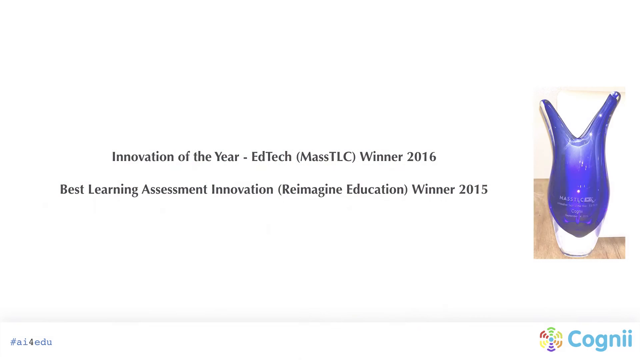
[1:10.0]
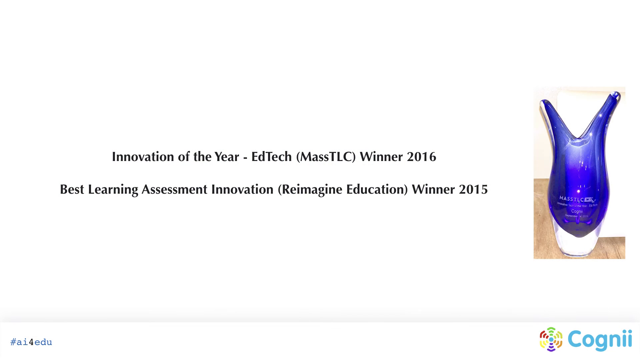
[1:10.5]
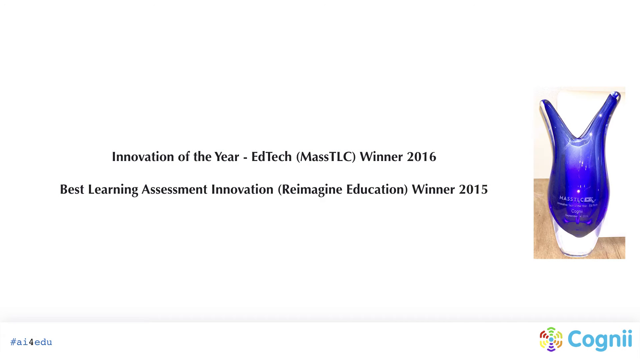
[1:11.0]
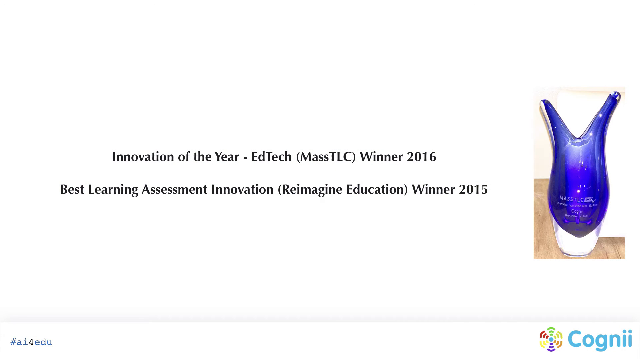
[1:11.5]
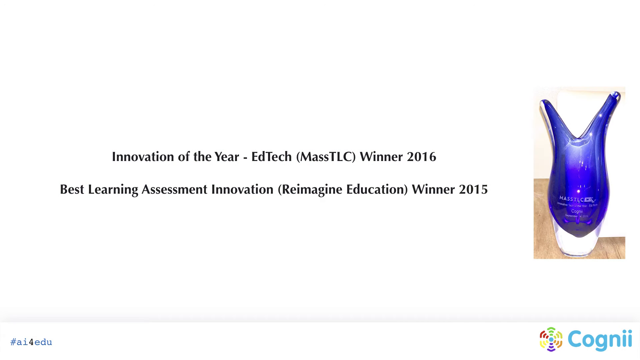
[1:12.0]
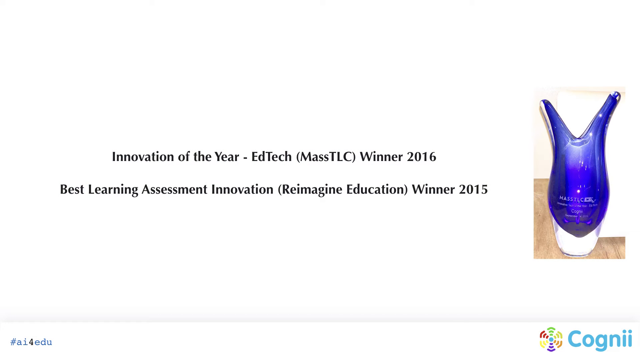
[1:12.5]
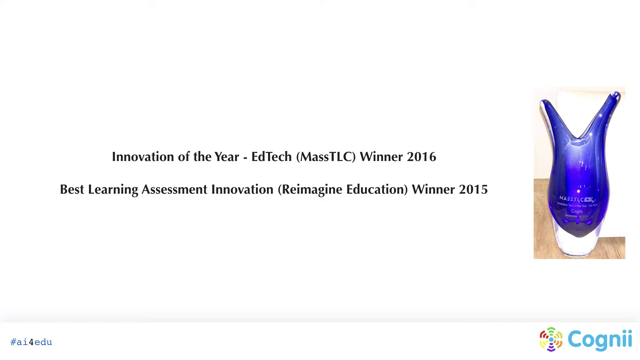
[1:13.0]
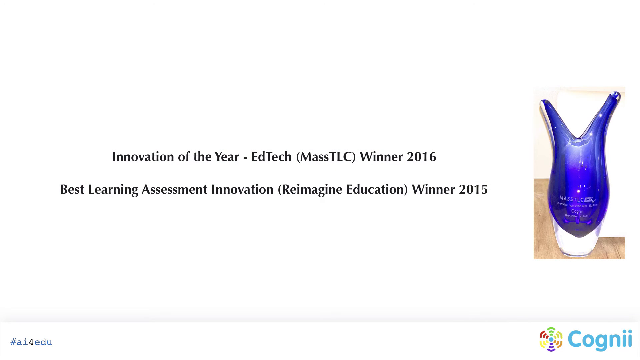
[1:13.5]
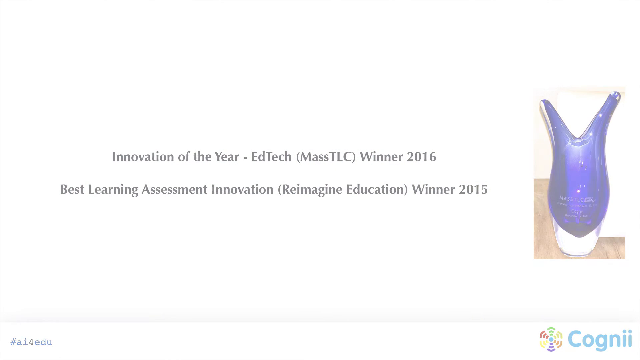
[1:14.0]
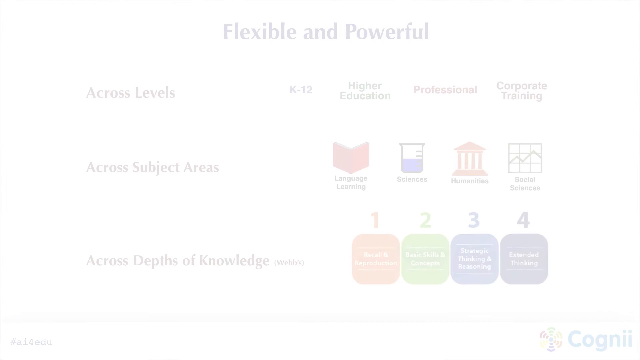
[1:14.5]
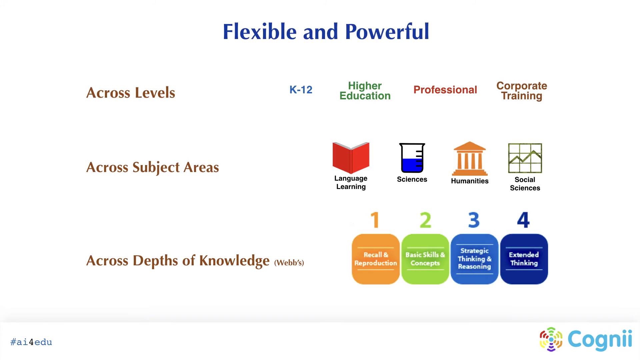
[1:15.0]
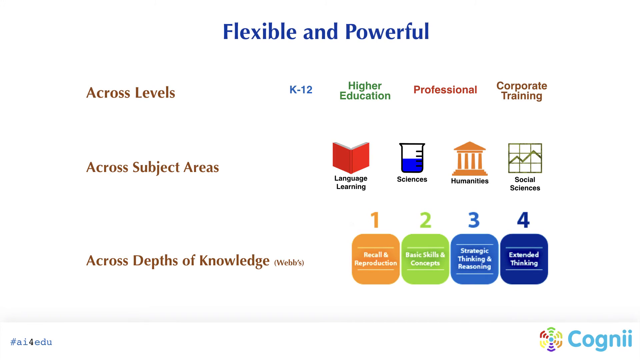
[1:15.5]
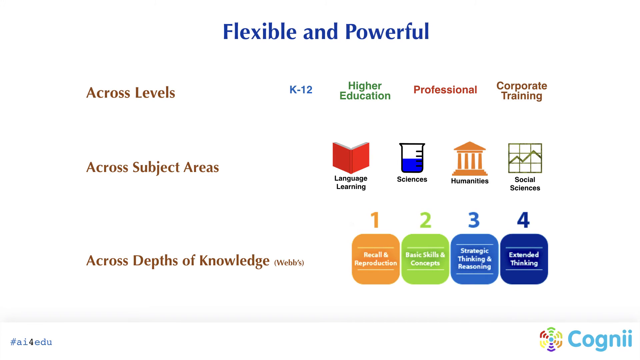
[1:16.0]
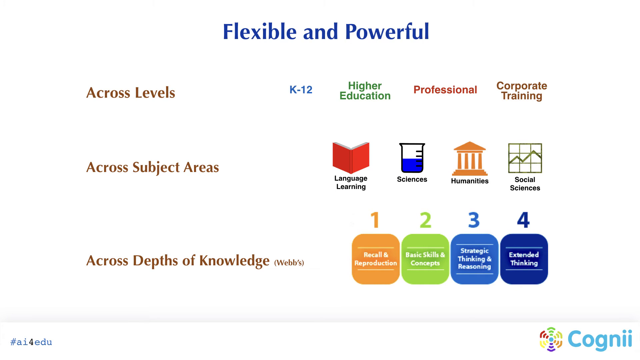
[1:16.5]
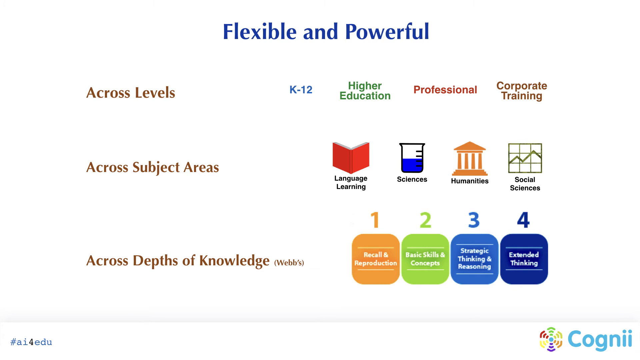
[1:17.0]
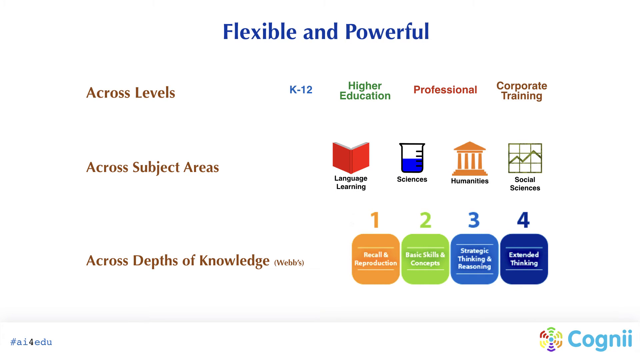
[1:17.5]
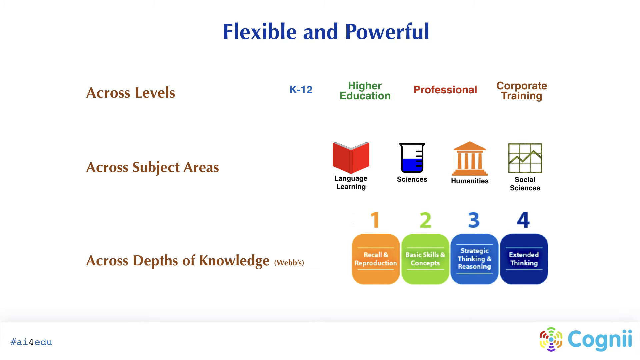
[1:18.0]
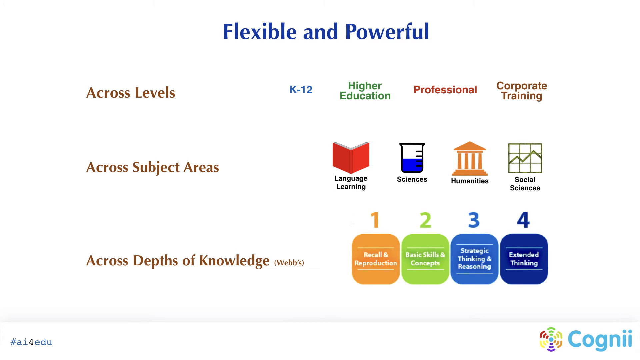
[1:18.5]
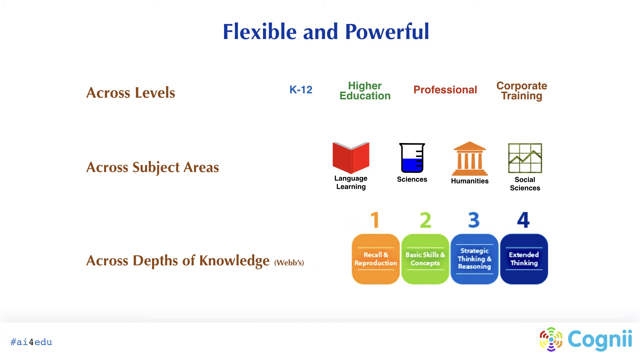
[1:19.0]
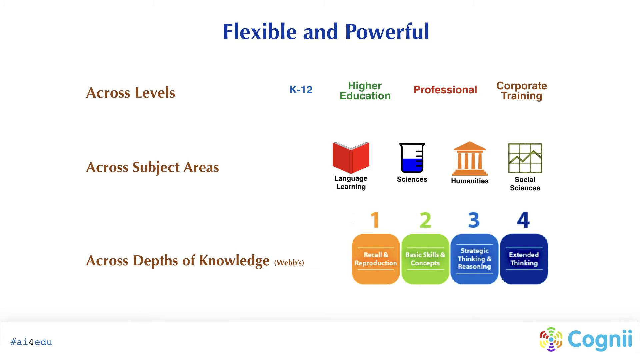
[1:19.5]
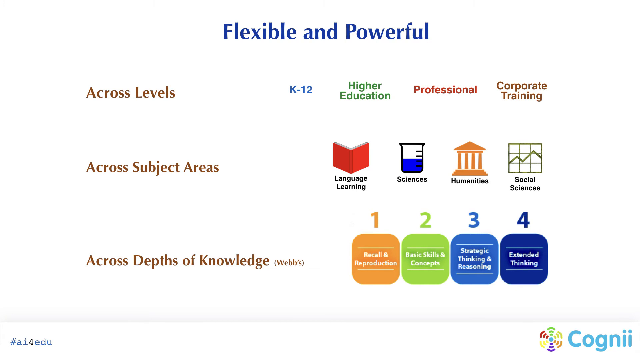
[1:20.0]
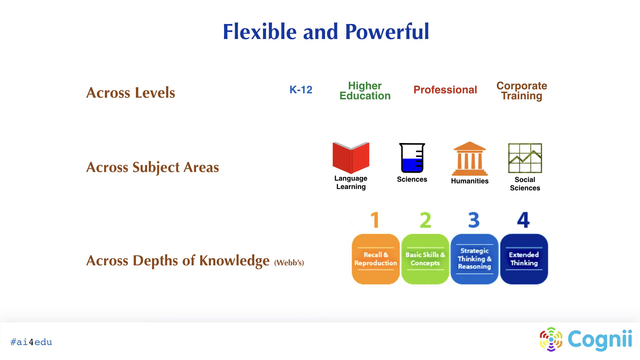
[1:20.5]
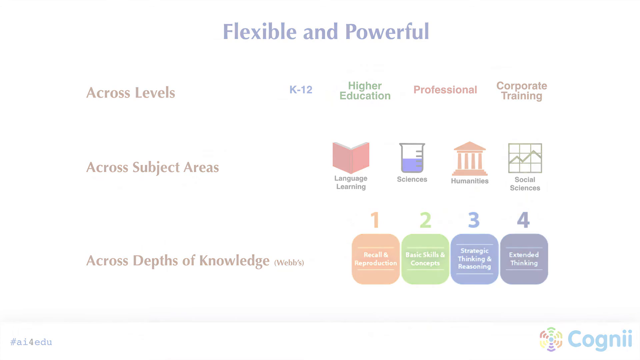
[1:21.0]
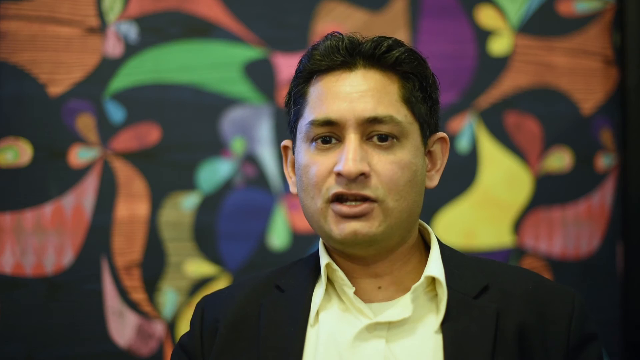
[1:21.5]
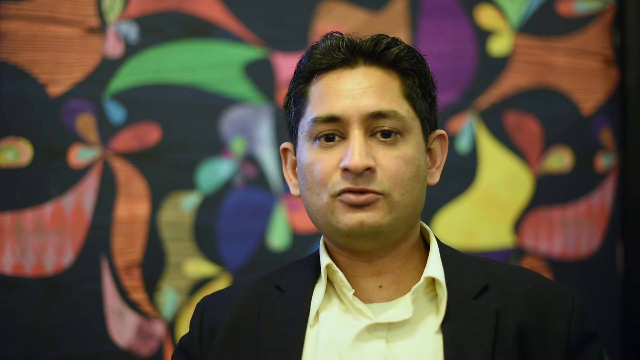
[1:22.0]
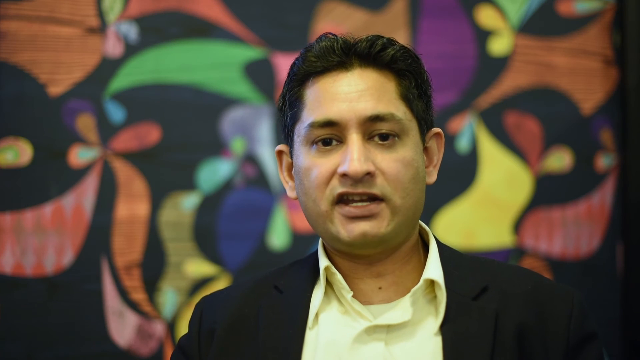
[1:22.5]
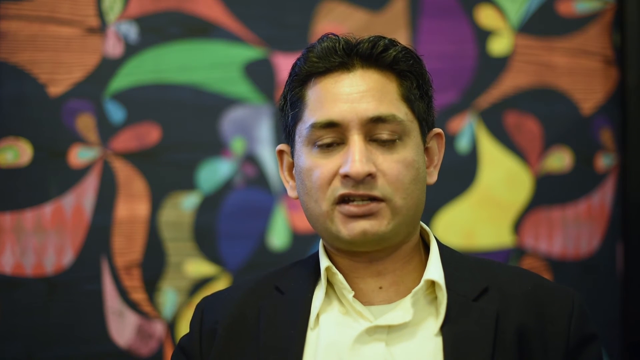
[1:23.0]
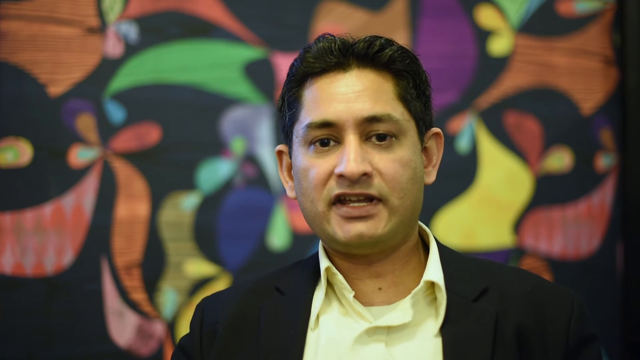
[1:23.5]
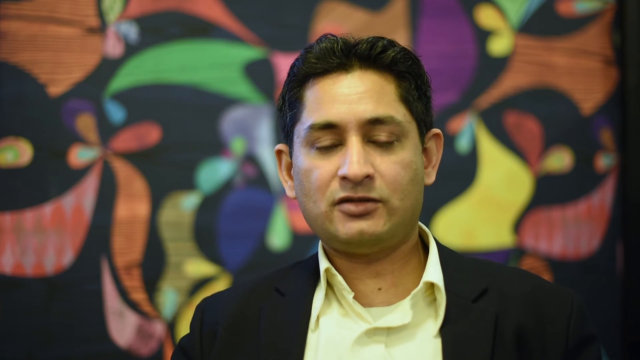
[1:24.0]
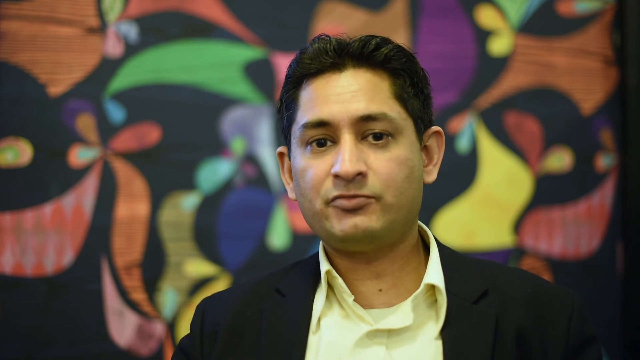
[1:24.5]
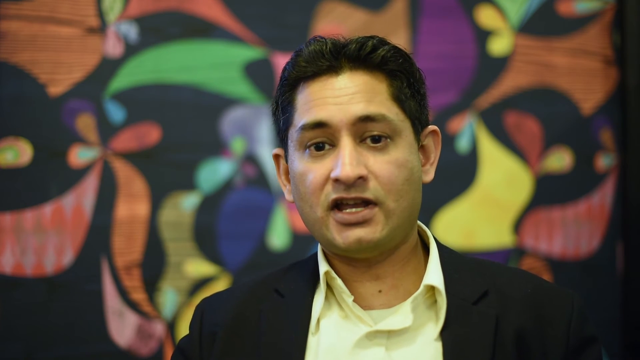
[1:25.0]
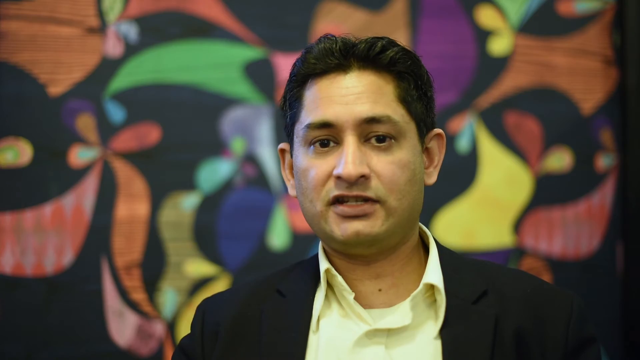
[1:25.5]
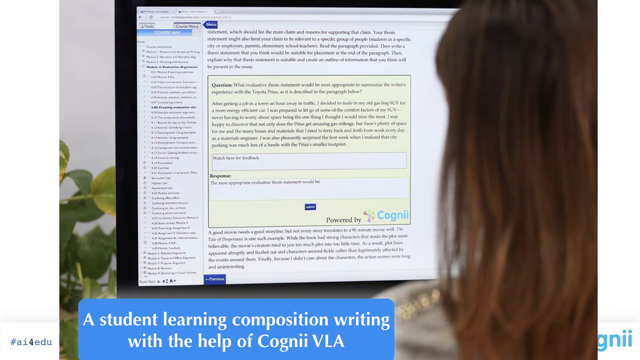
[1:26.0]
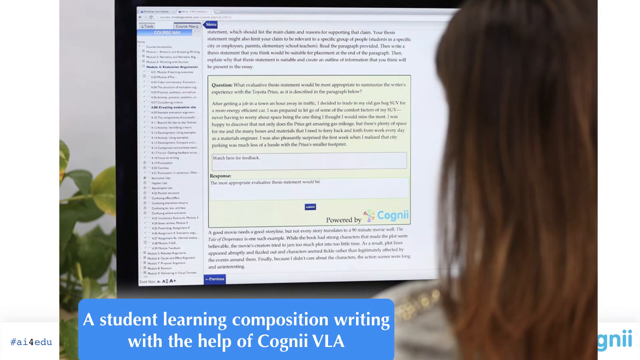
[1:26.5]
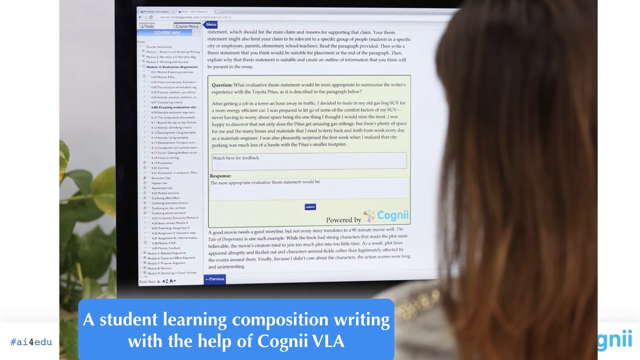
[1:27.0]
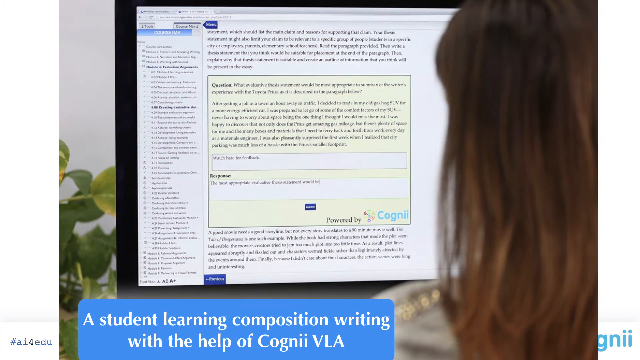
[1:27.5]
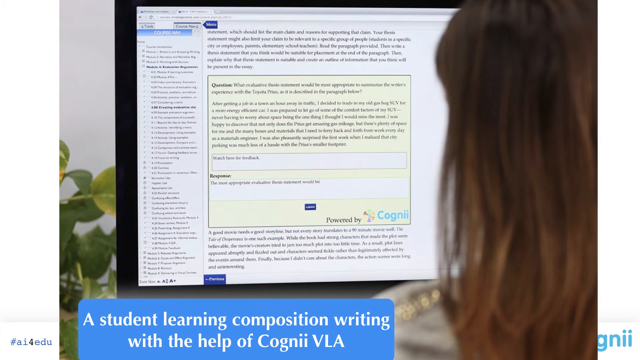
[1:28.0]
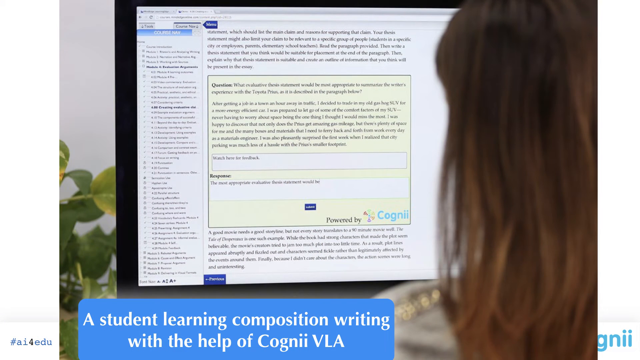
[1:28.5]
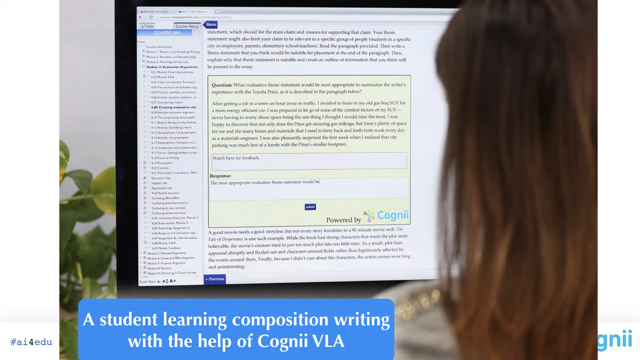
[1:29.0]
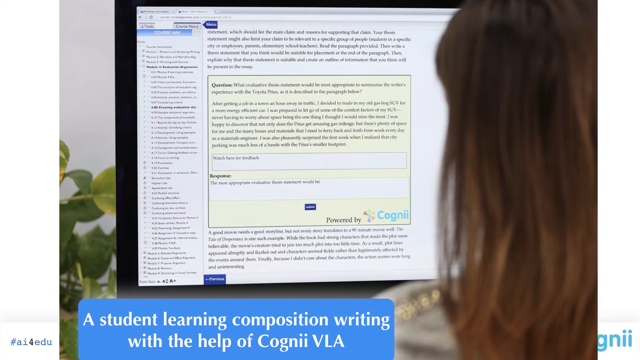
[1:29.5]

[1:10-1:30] Awards are shown: innovation of the year, TLC winner 2016 in learning assessment innovation, and reimagining education winner 2015. The platform's range is laid out across levels (K-12, higher education, professional and corporate training), across subject areas (language learning, sciences, humanities, social science) and across depth of knowledge levels 1, 2, 3 and 4, followed by flexible and powerful learning tools and student learning compositions in writing supported by AI.